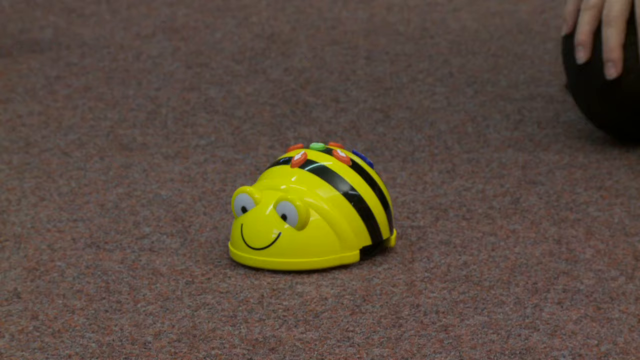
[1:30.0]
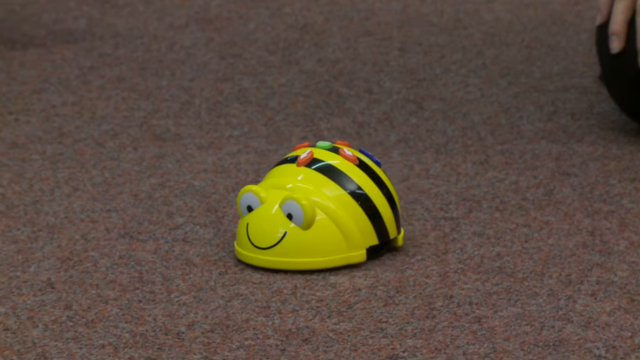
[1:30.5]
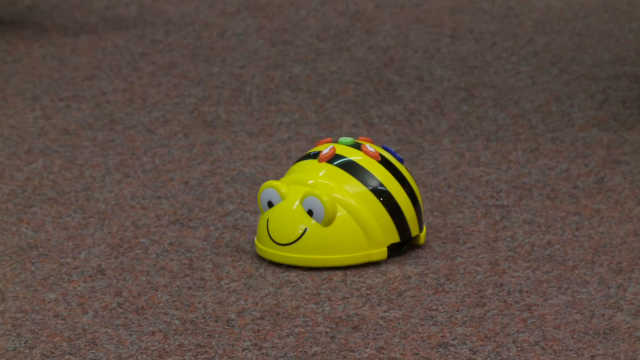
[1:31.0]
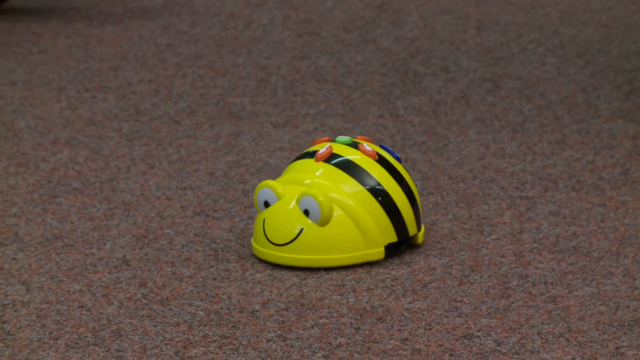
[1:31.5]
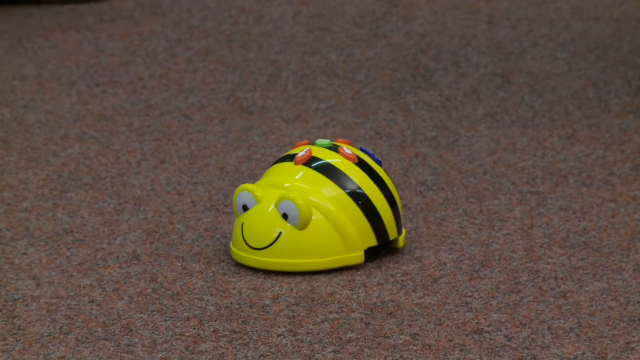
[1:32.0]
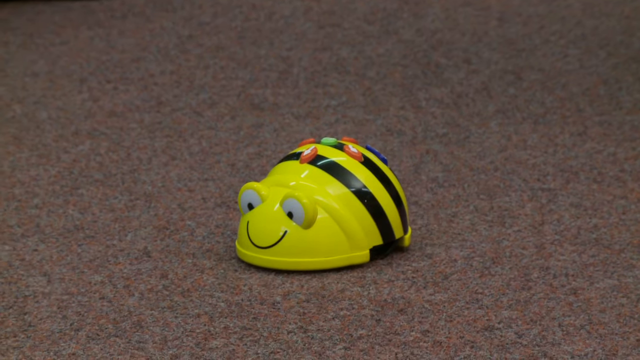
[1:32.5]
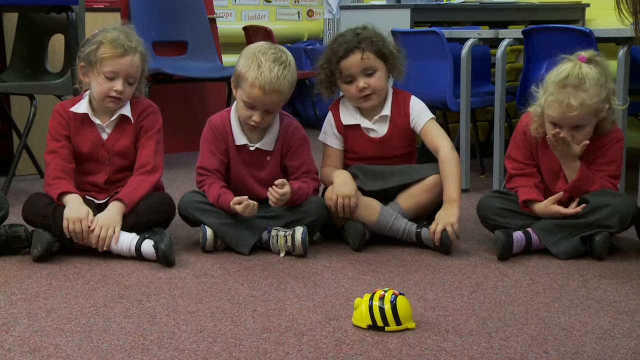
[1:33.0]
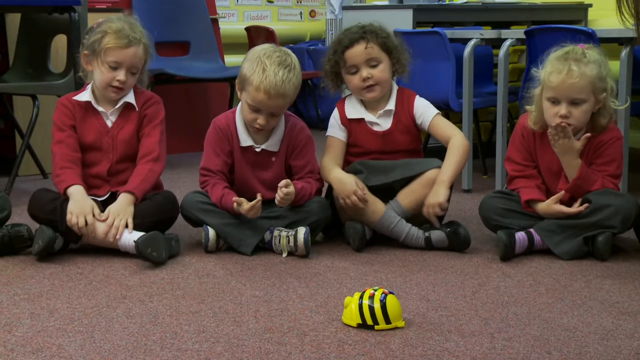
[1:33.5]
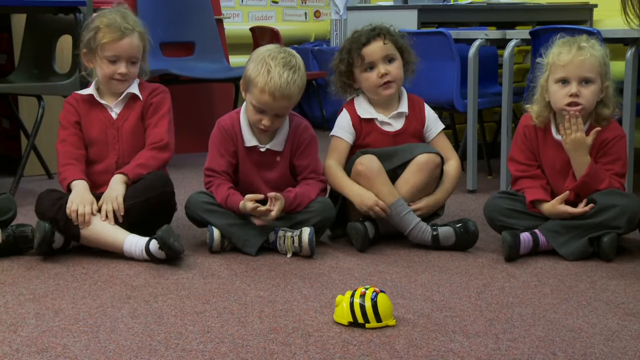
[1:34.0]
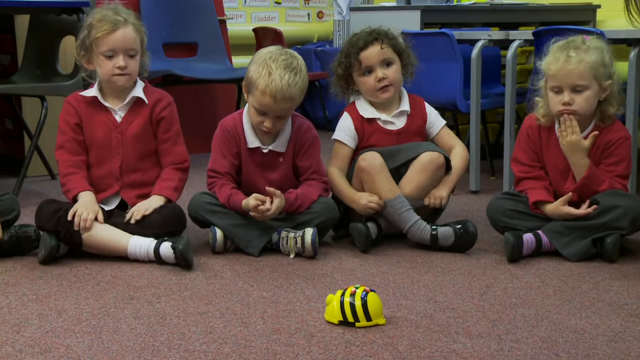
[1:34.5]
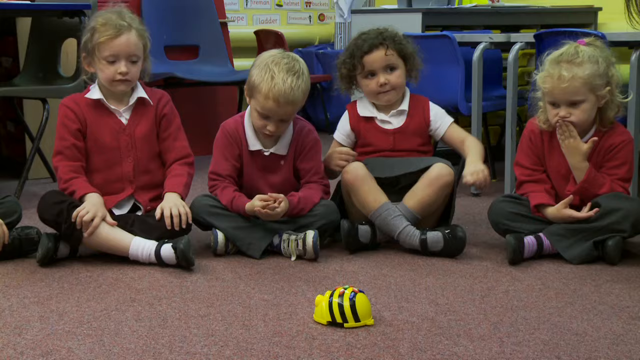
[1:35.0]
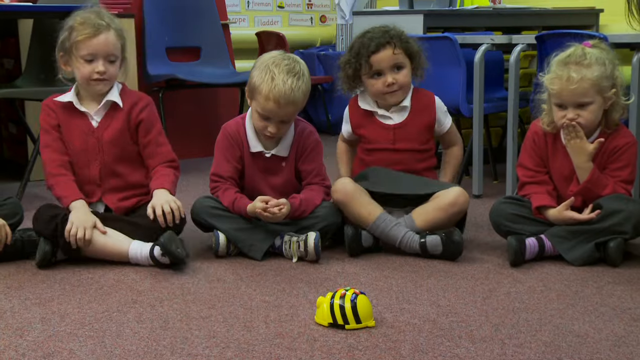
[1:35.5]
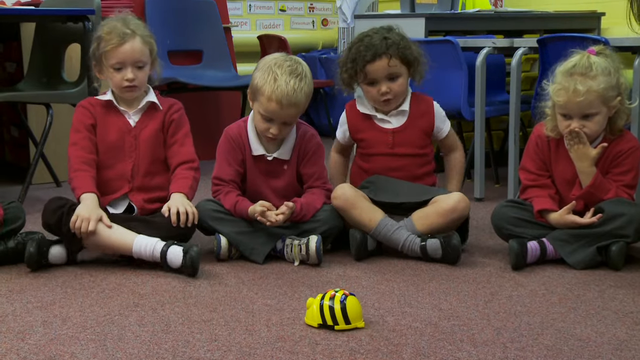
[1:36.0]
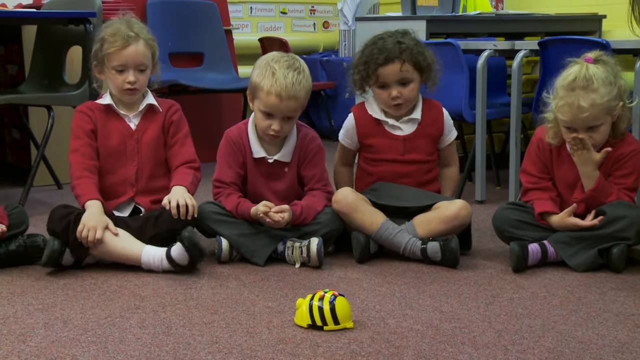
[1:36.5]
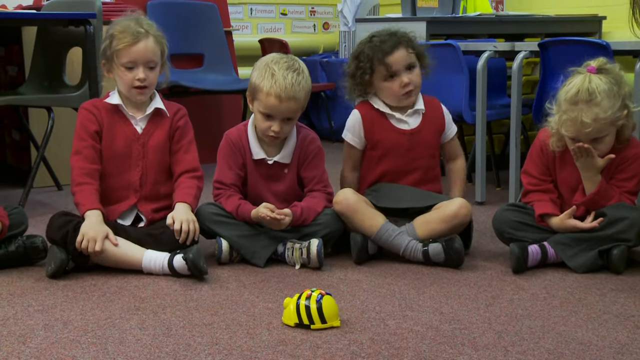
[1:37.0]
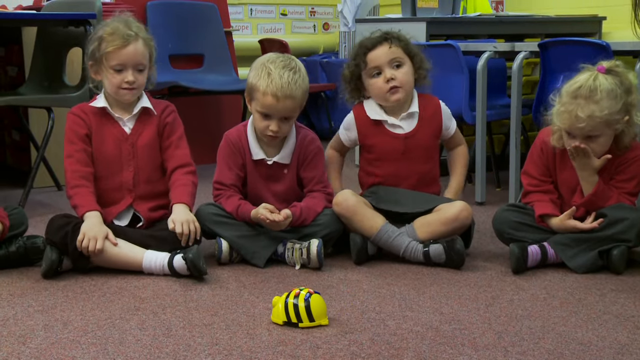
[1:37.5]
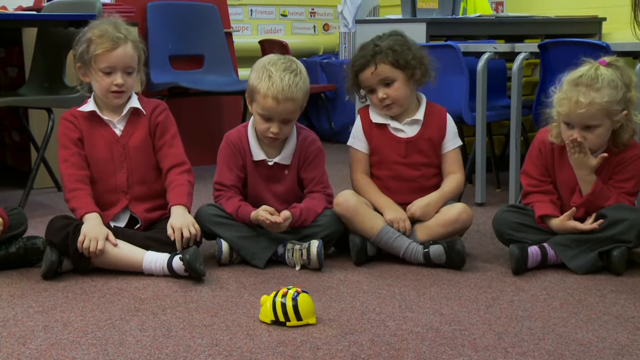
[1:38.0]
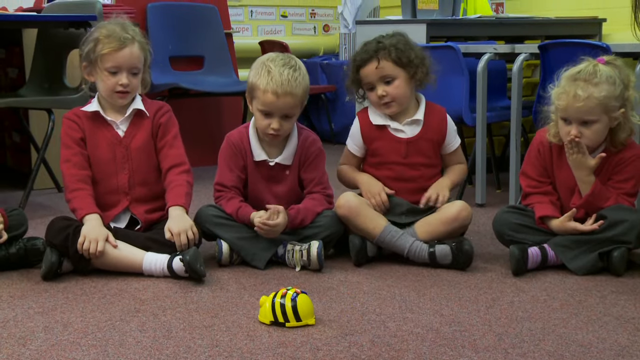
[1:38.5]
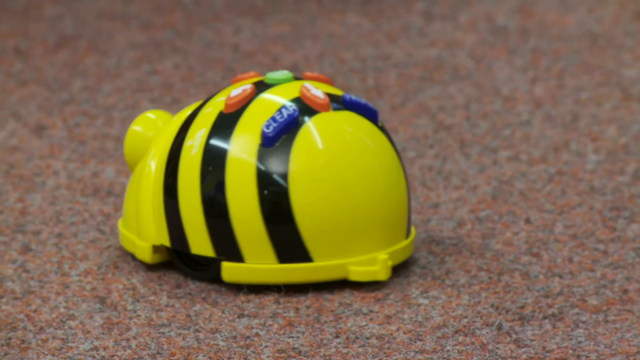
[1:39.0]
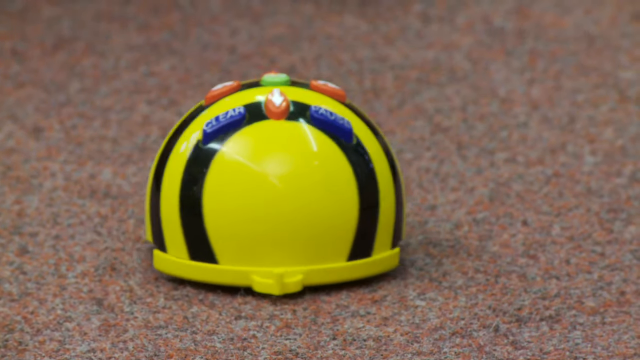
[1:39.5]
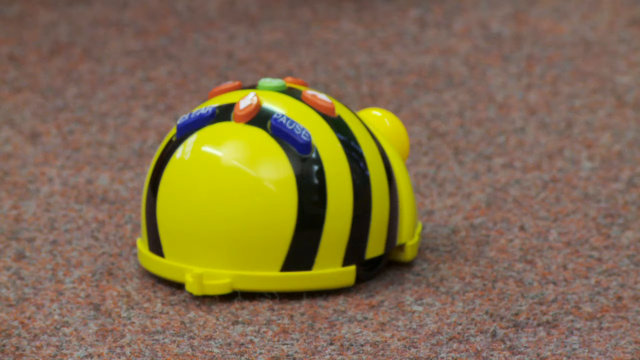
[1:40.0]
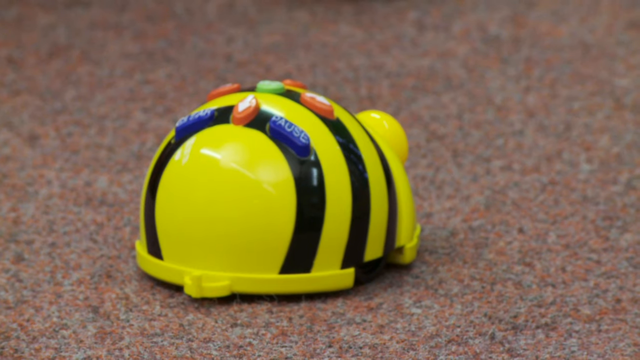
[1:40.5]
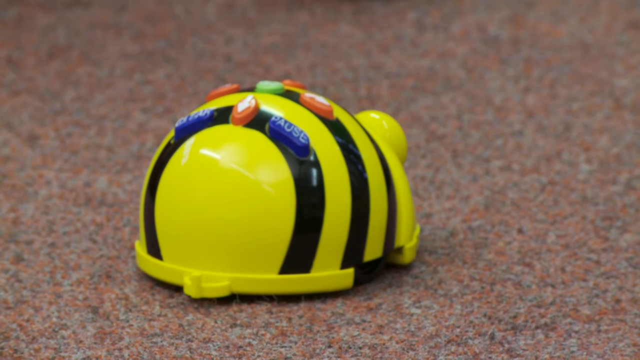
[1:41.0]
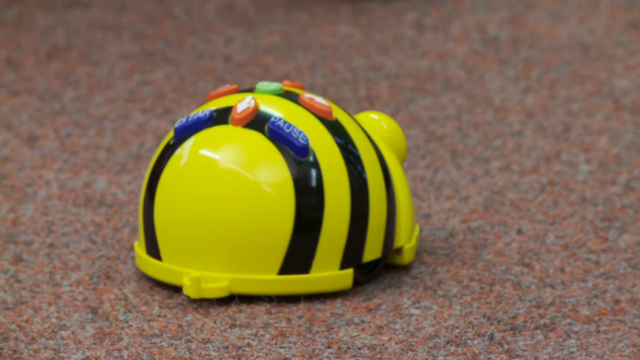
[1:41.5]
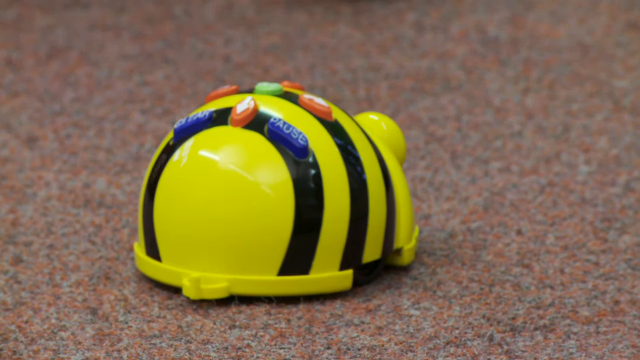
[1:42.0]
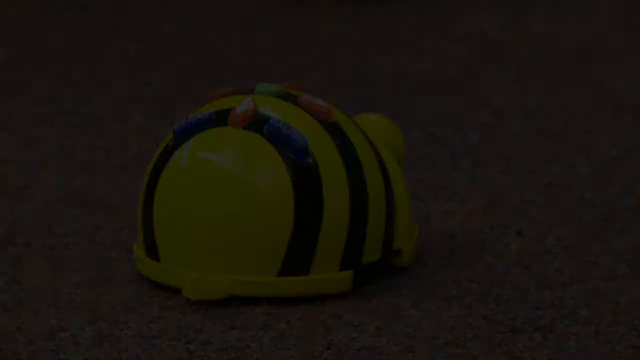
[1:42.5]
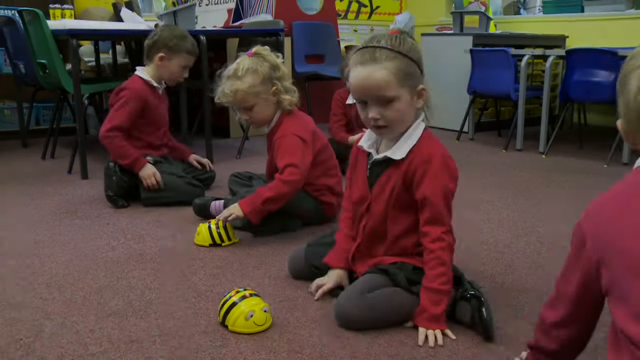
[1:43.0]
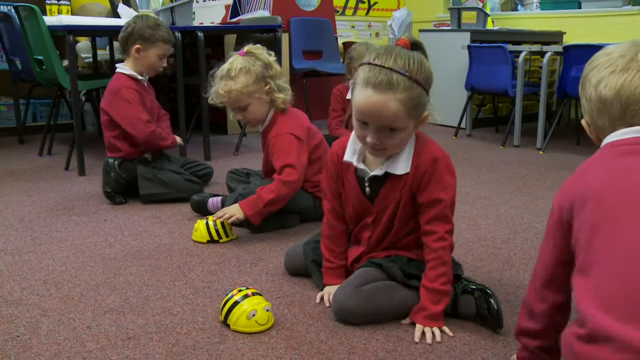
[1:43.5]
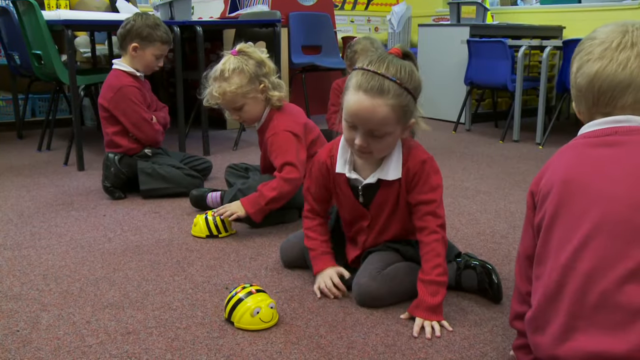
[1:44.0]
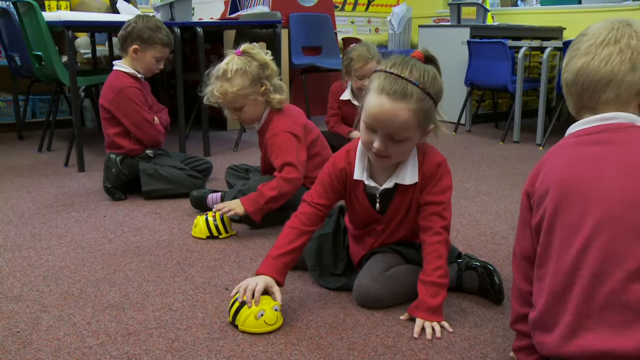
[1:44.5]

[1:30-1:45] The bee bot moves across the carpet towards the group of children, its eyes lit up. The children are mostly paying attention to it, but one young boy in the very front, towards whom the bot is kind of moving, is not; he seems more interested in his hands and looks like he is counting. When the bee gets closer, he looks up at the toy. The children around him are moving around and look very antsy, as if in anticipation of the bee bot reaching them, looking at the teacher and then down at the bot as it comes towards them. Right before reaching the group, the bot seems to make a 45-degree turn and face somewhat almost the opposite direction. The camera then pans to the group of children still sitting on the floor, now with another bee bot: one group on the side plays with one bee bot, pressing the buttons on top, while the other group plays with the other bee bot as it comes towards them.